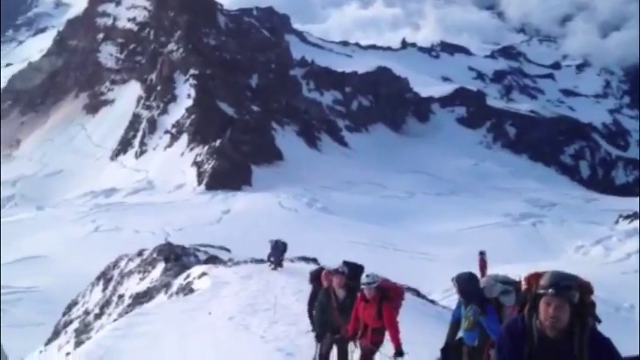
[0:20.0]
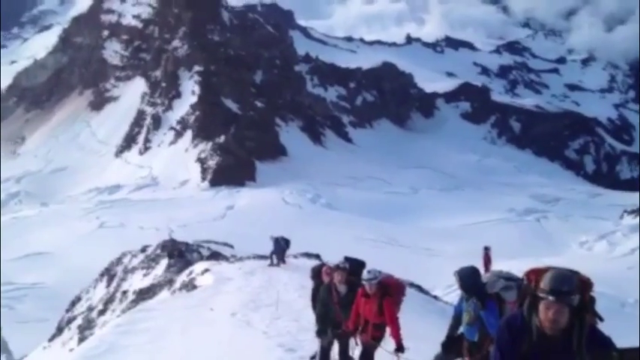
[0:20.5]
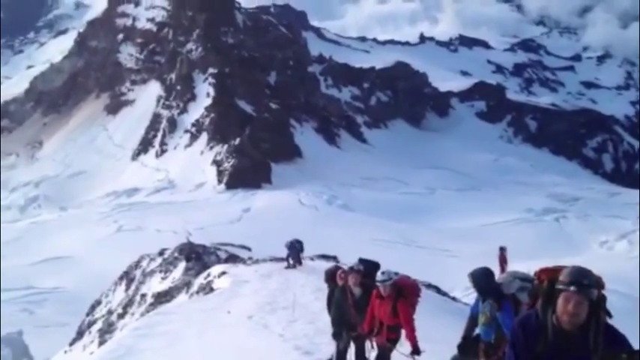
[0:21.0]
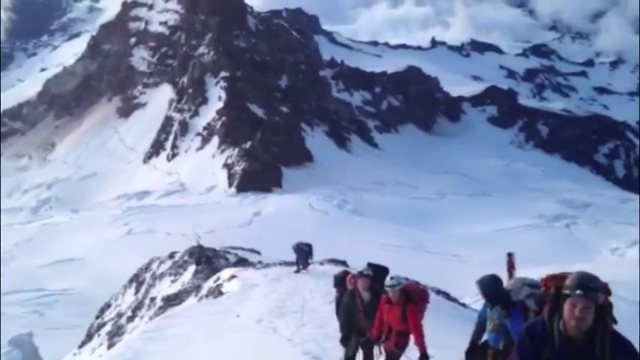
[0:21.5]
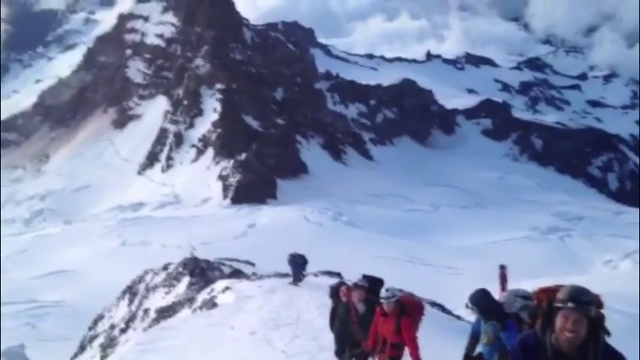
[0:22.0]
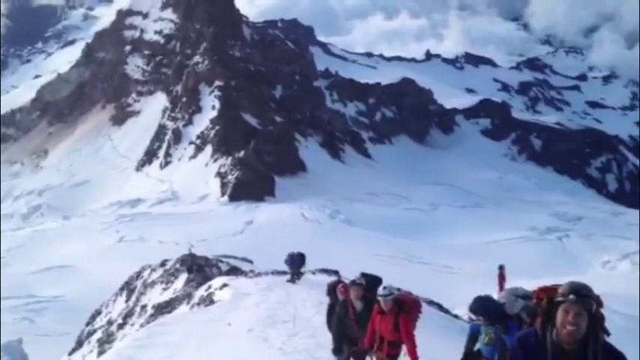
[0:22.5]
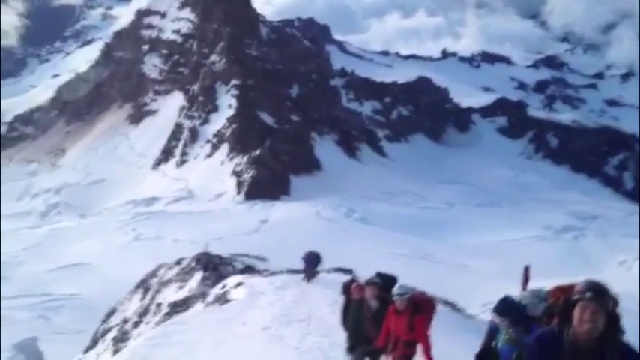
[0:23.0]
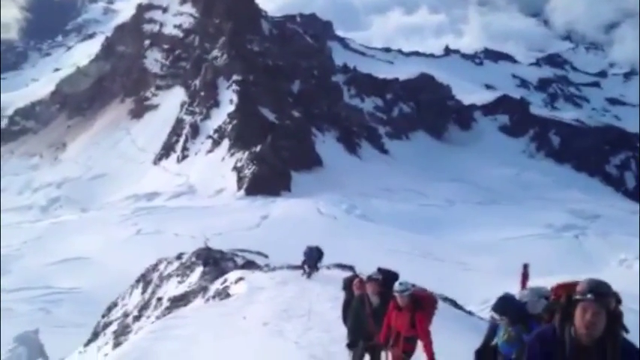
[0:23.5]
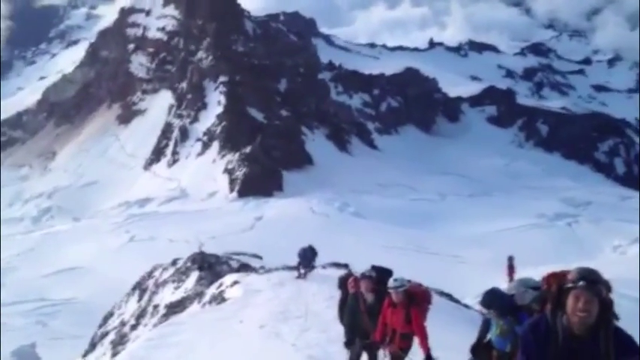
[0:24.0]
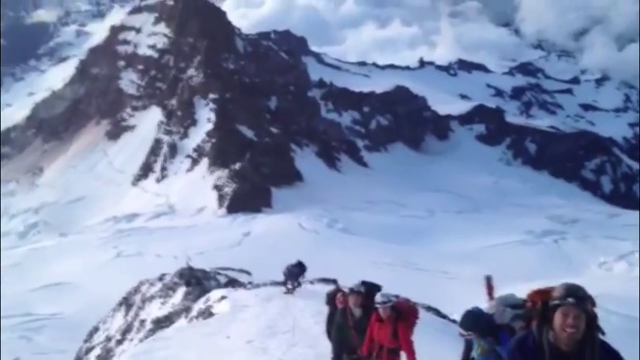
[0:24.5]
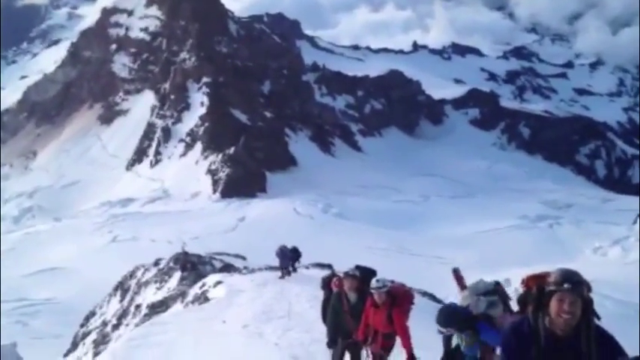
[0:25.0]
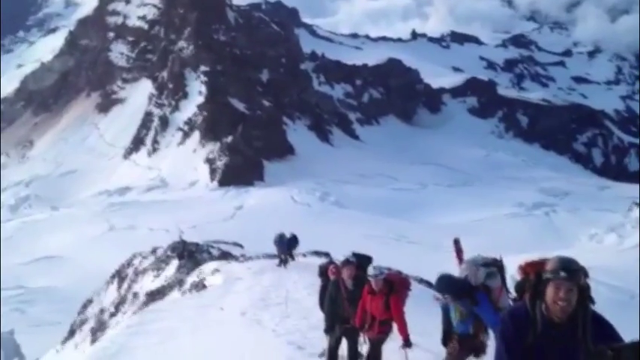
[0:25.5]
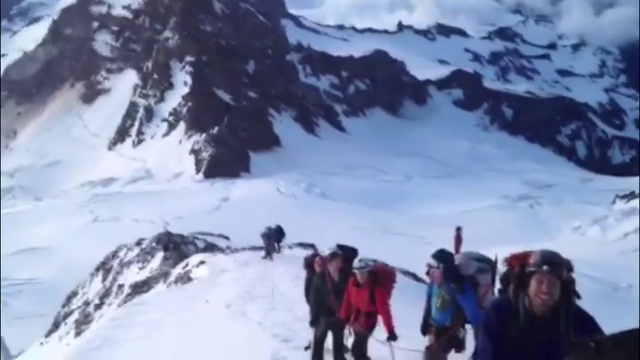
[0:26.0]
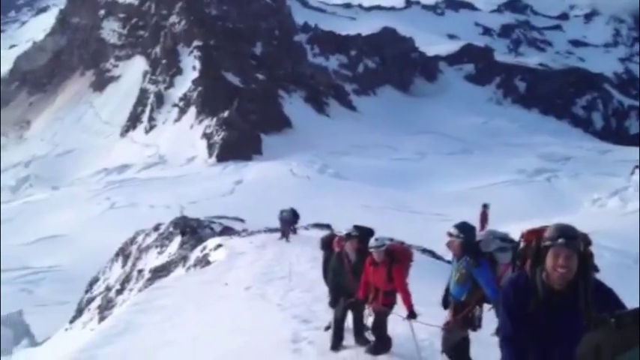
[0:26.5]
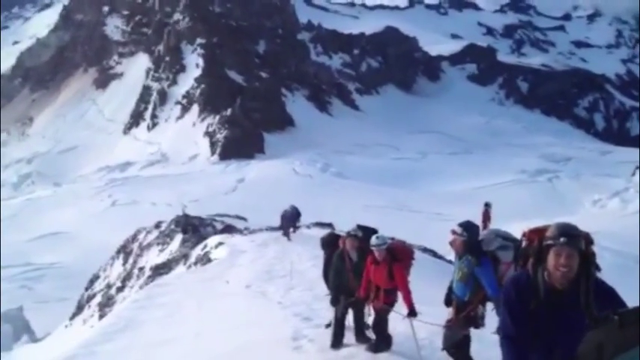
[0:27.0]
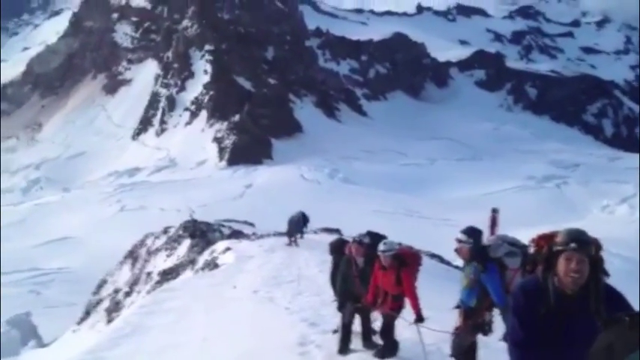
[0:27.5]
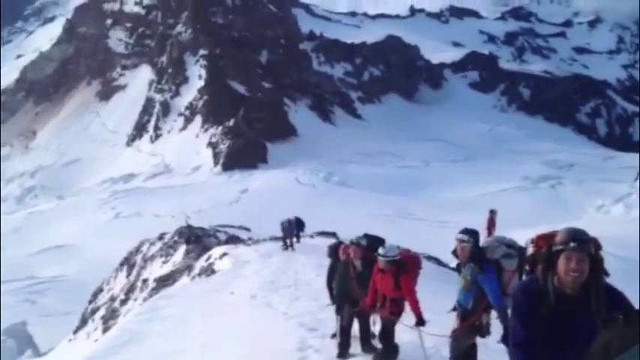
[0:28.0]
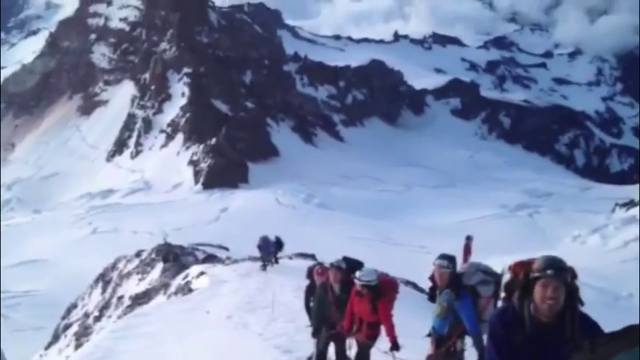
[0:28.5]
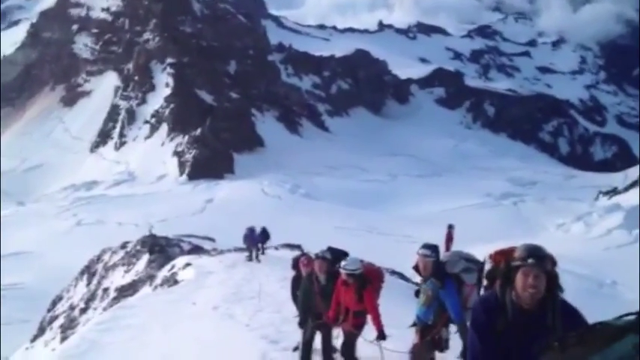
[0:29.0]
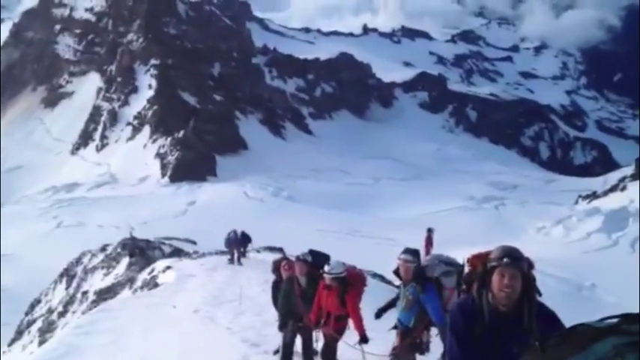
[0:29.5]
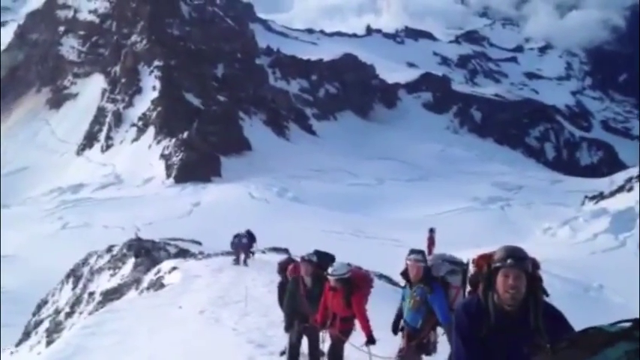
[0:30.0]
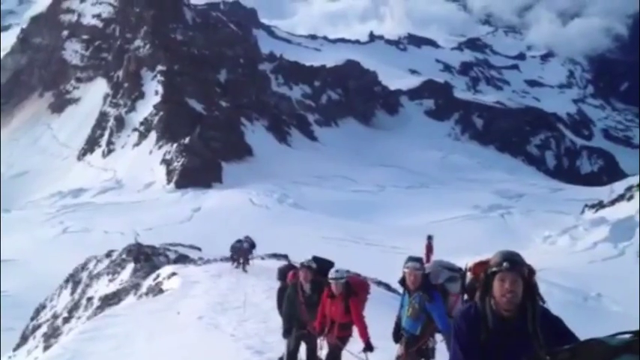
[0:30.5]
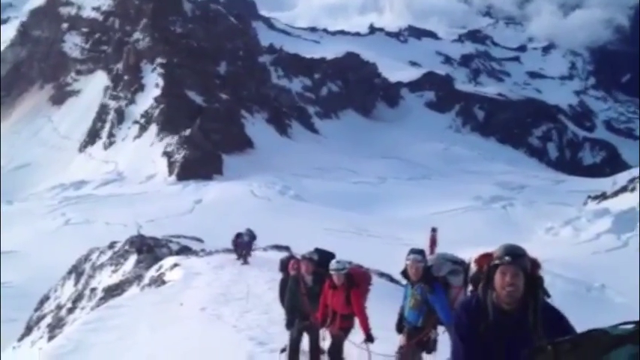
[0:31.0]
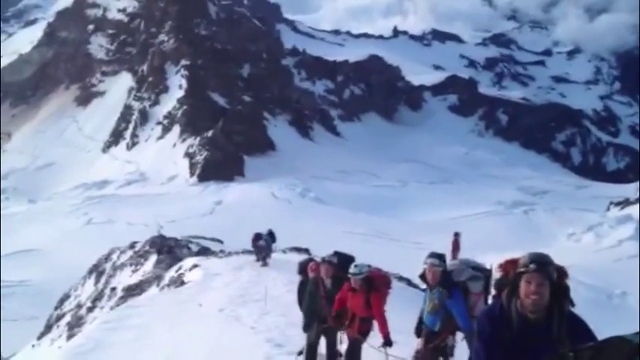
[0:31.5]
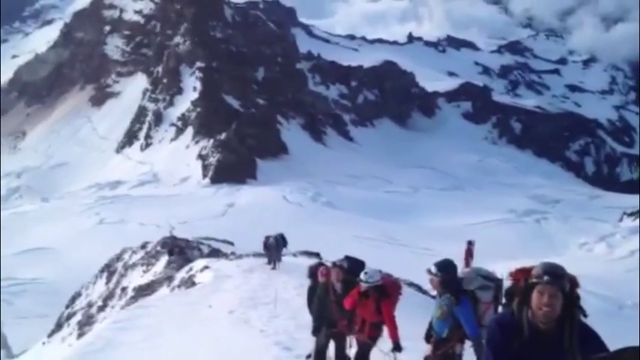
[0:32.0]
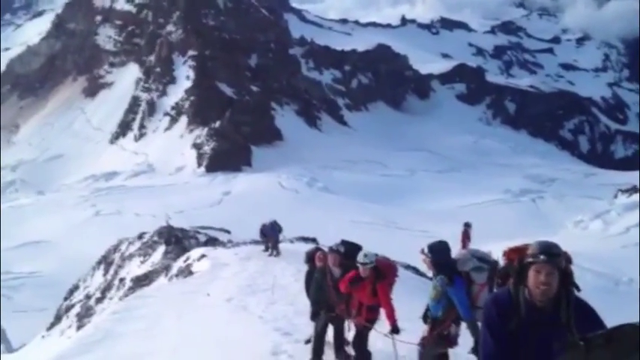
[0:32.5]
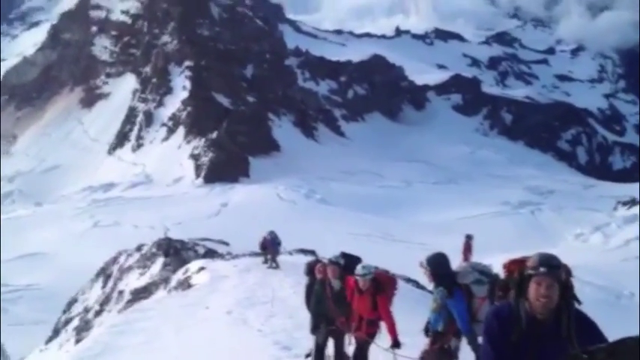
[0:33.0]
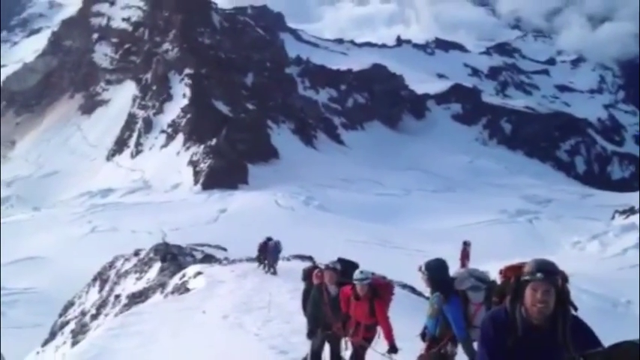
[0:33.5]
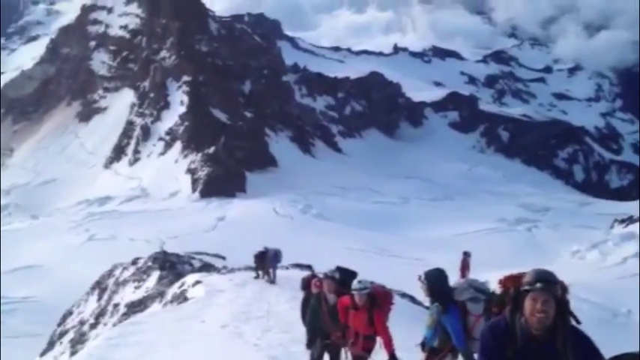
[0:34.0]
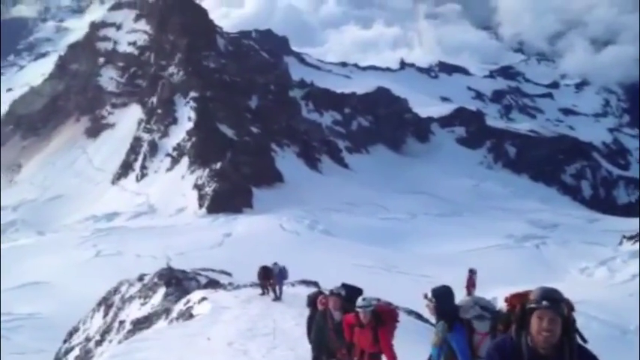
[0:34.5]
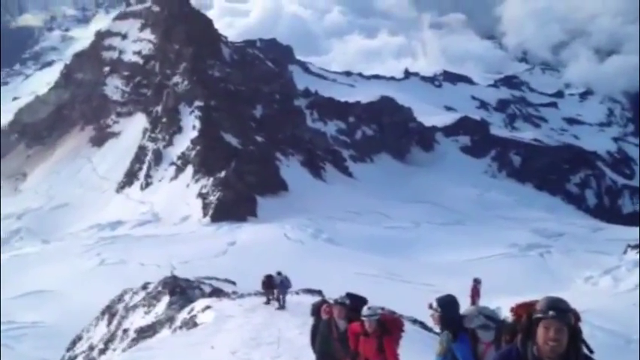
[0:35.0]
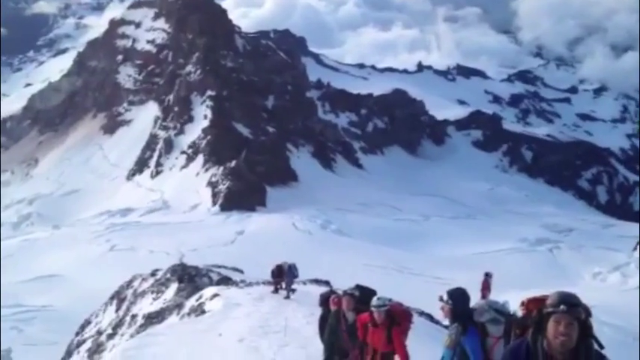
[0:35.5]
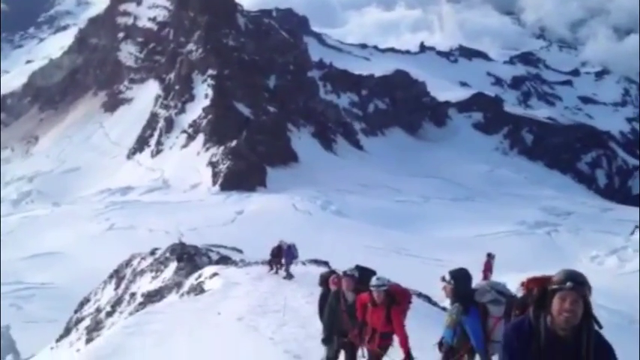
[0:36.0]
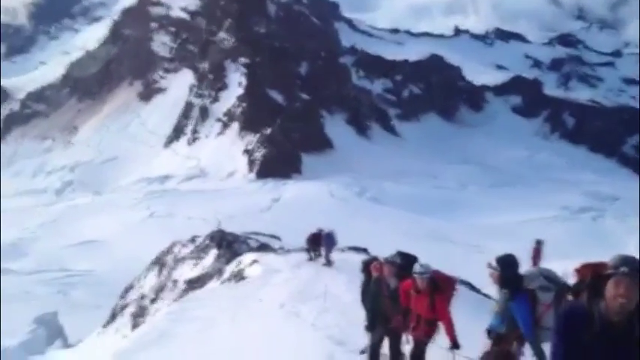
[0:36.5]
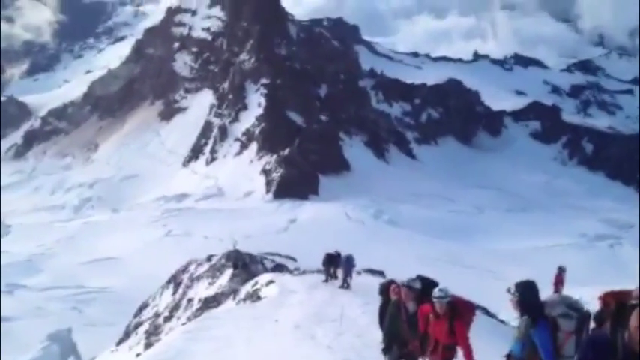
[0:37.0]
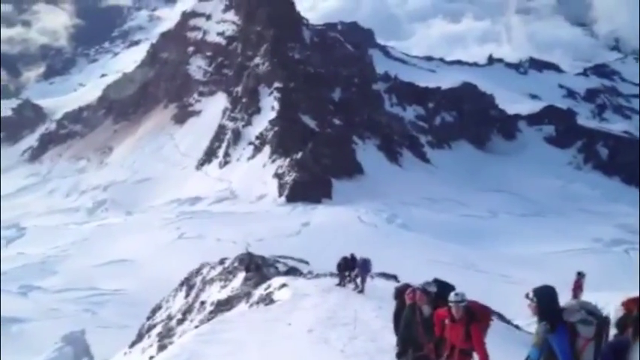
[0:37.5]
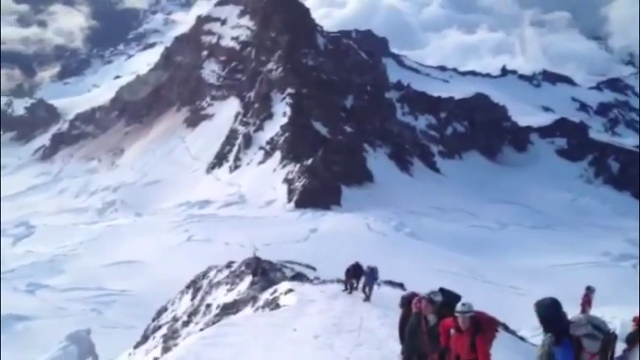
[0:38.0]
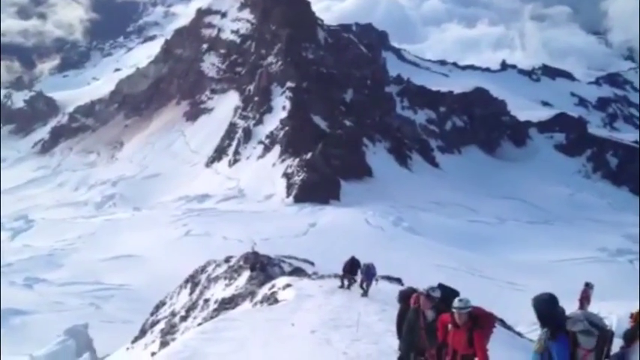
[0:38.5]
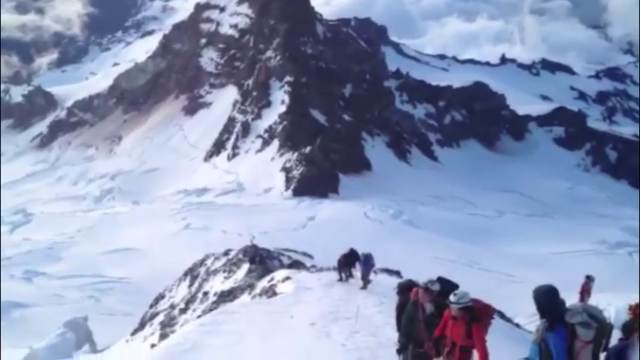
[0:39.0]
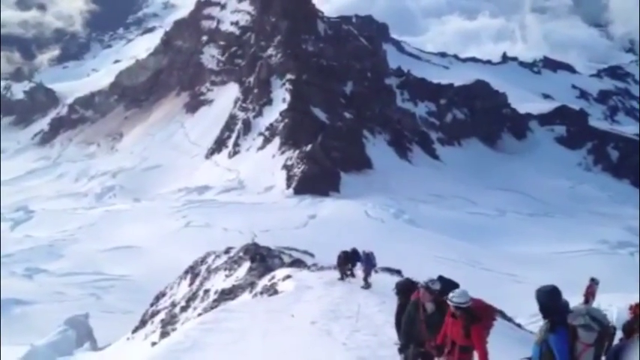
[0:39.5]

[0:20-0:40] Some individuals are at what may be the base of one of the mountains, with a large mountain in the distance. The two groups are on what seems to be a ridge of possibly another mountain. One individual, a white male, wears a protective helmet and climbing gear, and the others also have climbing gear with backpacks. The group appears to be mixed, both male and female; a woman apparently wears a red outfit with a white protective helmet and what seems to be a big red backpack. The camera is still shaking a little and turns to an angle. Some people appear to be walking upwards very slowly, apparently wearing some type of protective footwear to help them up the mountain toward the rest of the group; they move so slowly that it is unclear whether they are heading to the group or moving back and forth.